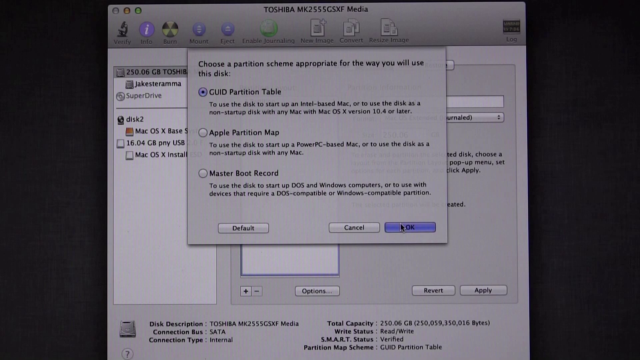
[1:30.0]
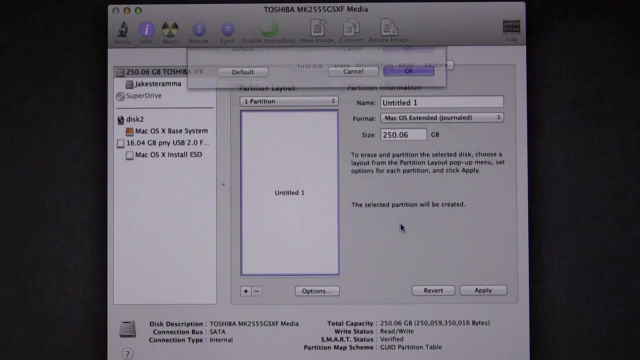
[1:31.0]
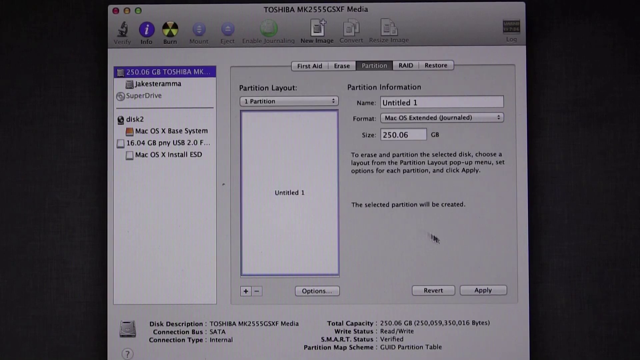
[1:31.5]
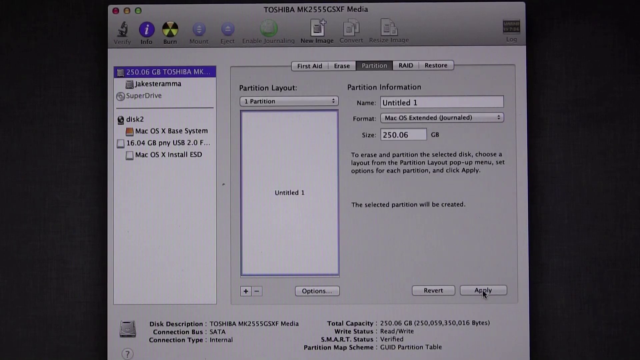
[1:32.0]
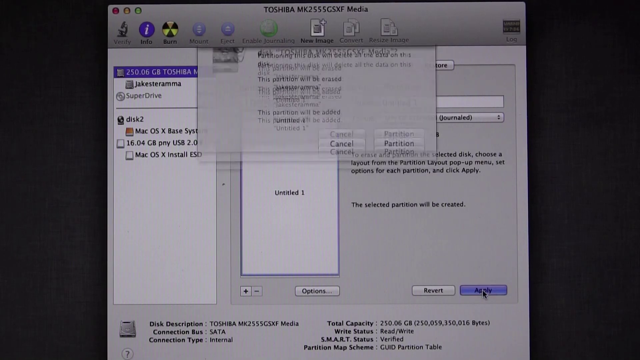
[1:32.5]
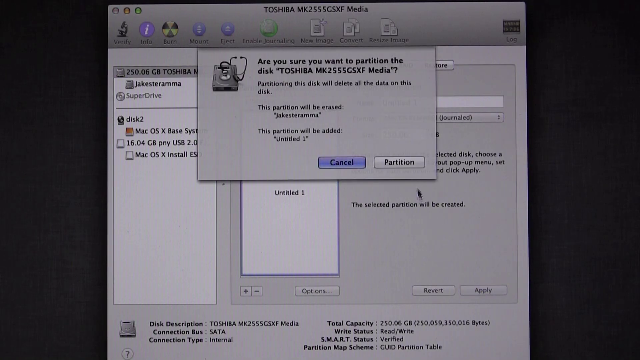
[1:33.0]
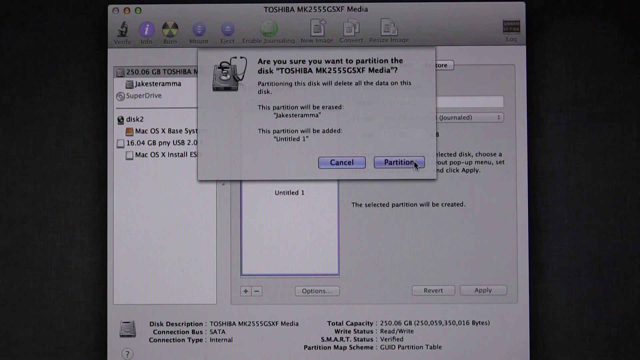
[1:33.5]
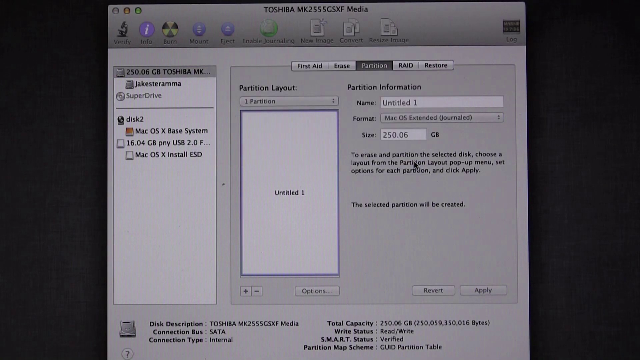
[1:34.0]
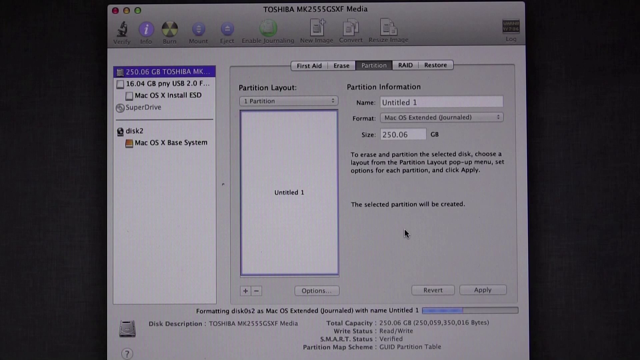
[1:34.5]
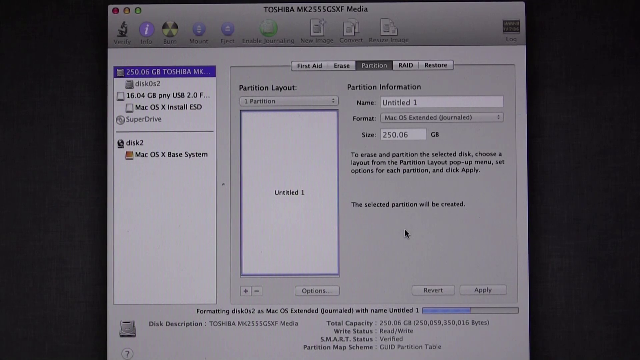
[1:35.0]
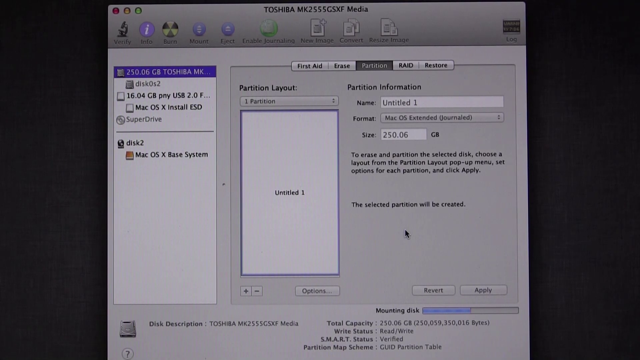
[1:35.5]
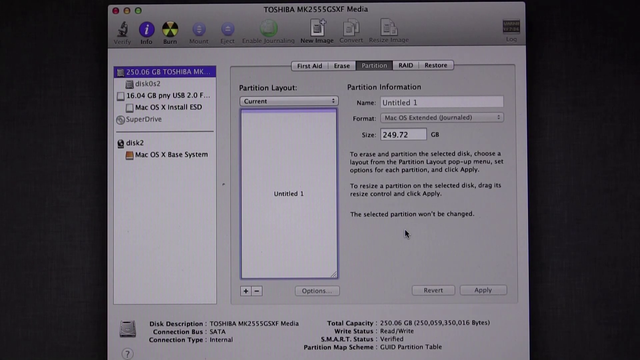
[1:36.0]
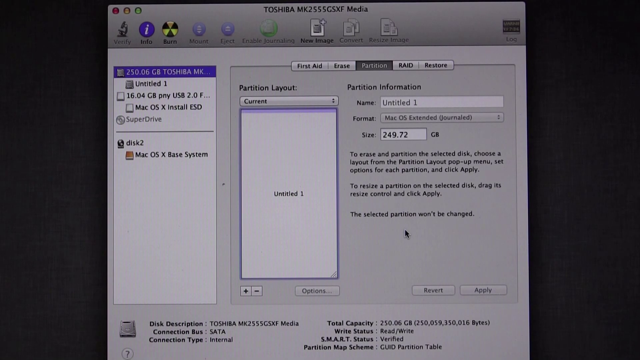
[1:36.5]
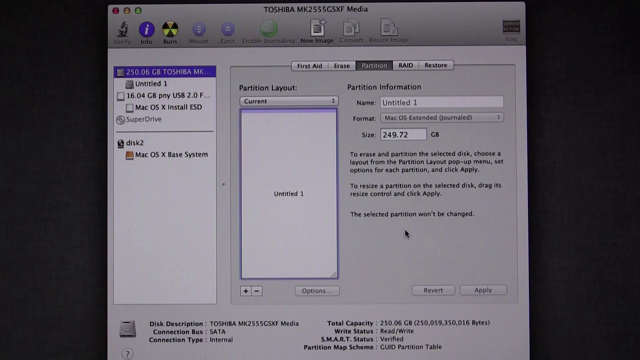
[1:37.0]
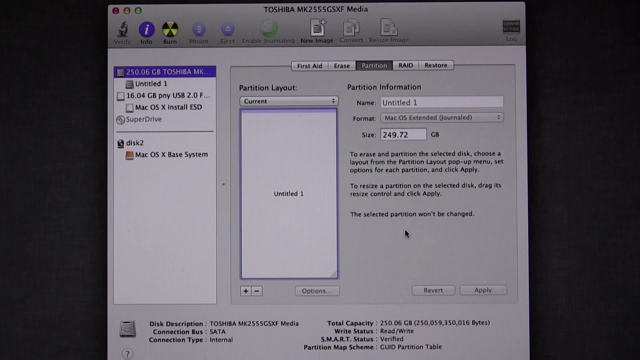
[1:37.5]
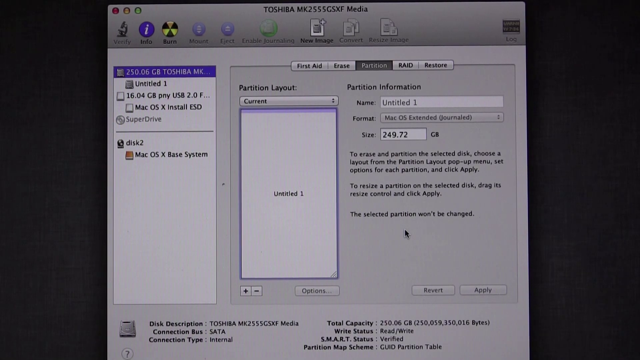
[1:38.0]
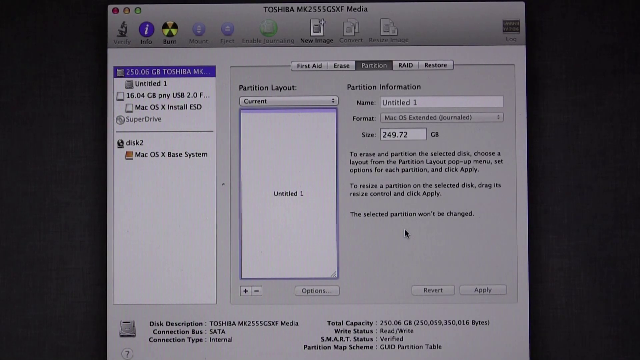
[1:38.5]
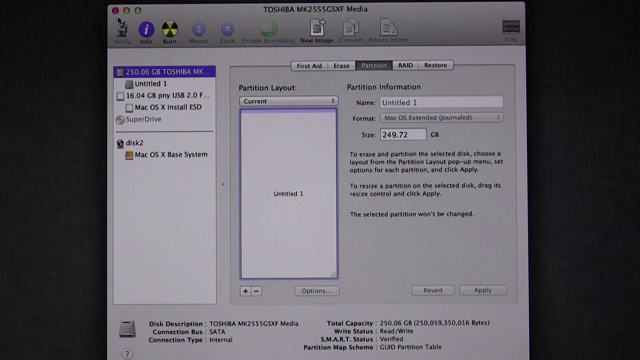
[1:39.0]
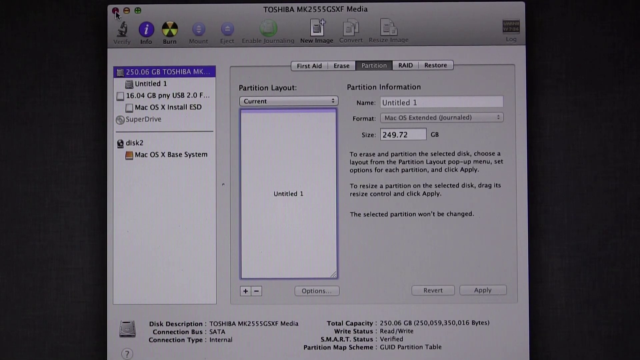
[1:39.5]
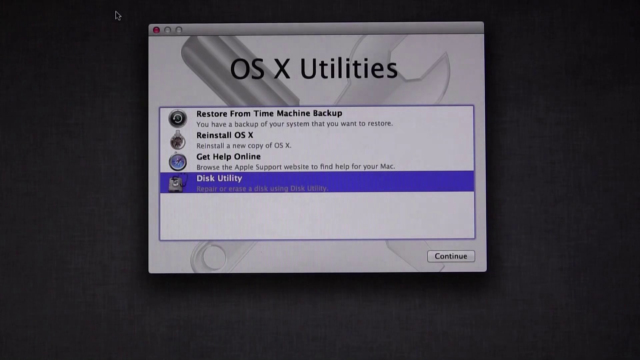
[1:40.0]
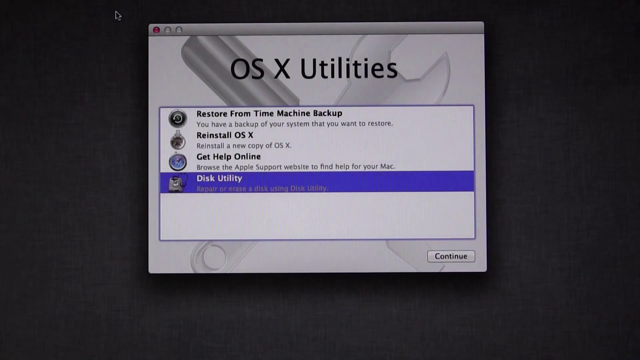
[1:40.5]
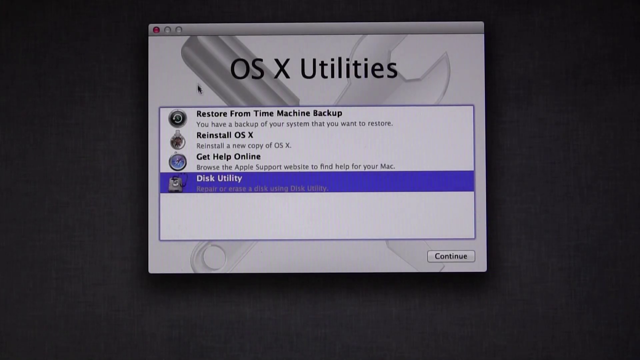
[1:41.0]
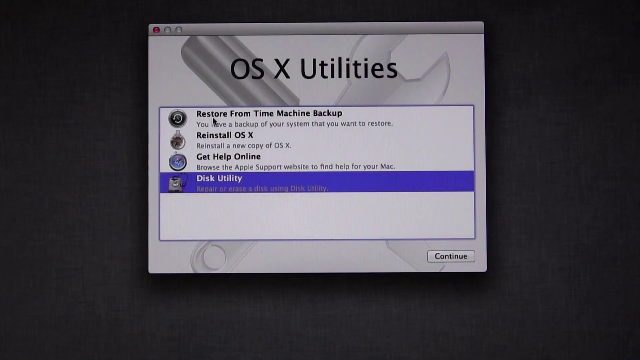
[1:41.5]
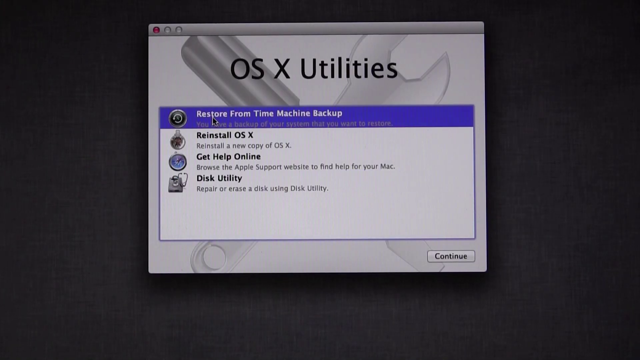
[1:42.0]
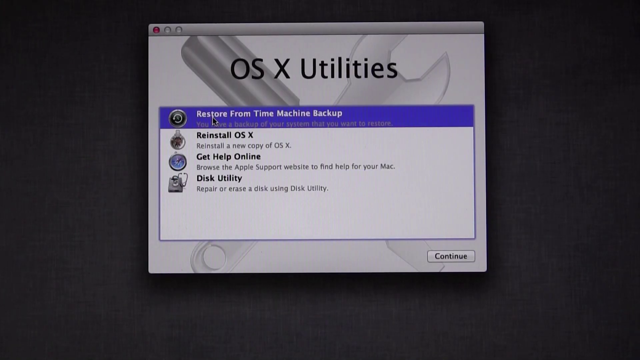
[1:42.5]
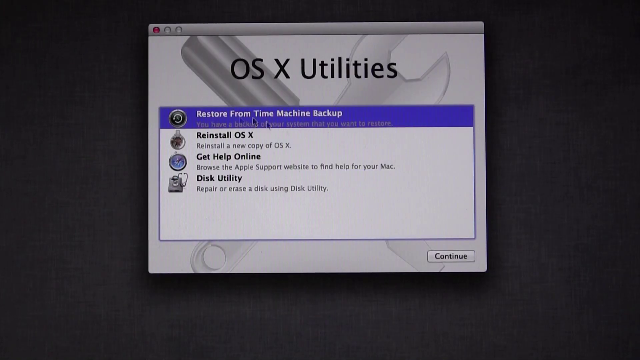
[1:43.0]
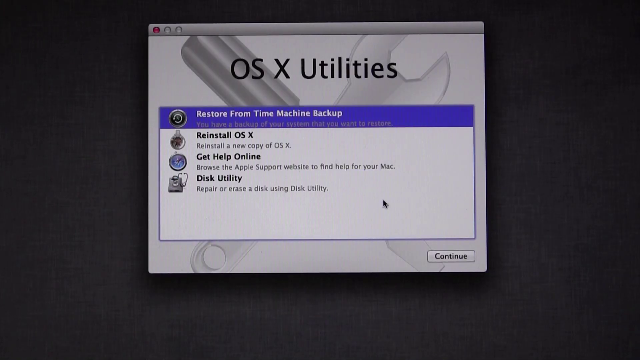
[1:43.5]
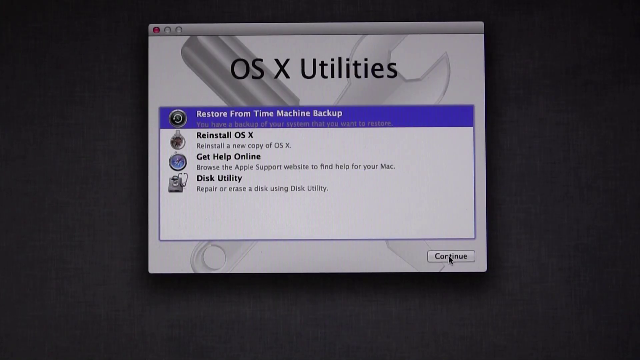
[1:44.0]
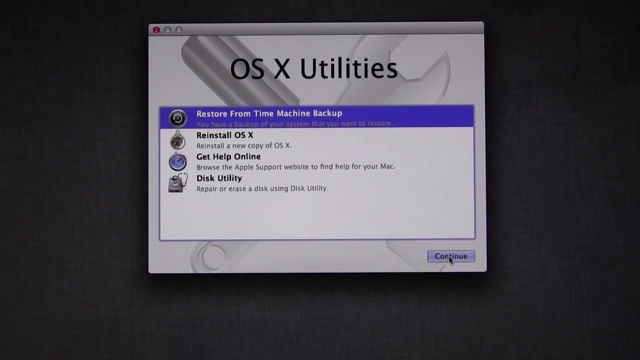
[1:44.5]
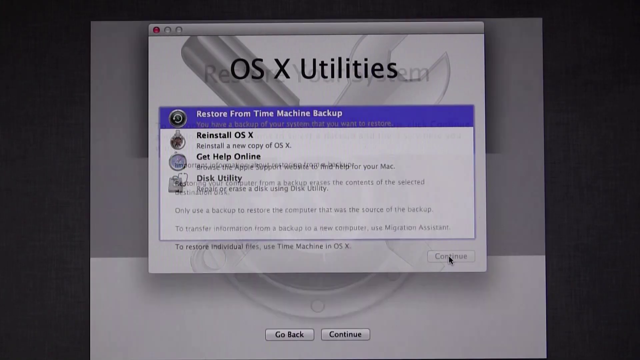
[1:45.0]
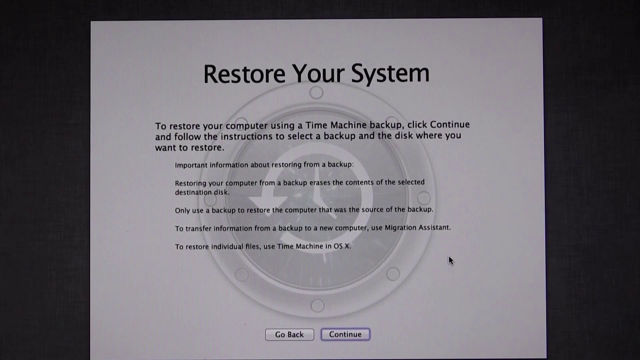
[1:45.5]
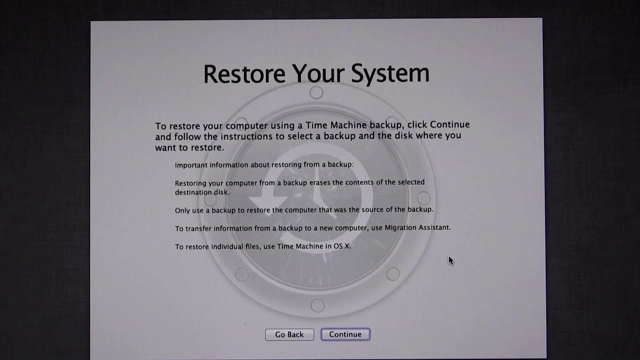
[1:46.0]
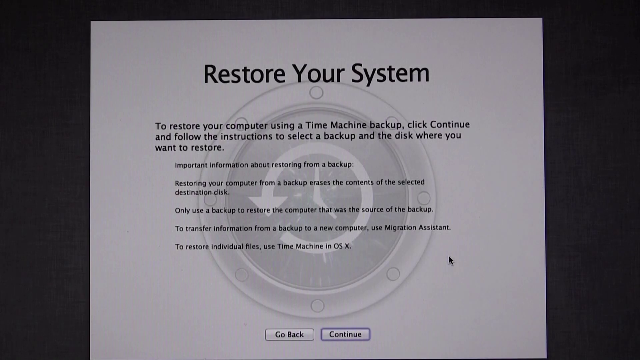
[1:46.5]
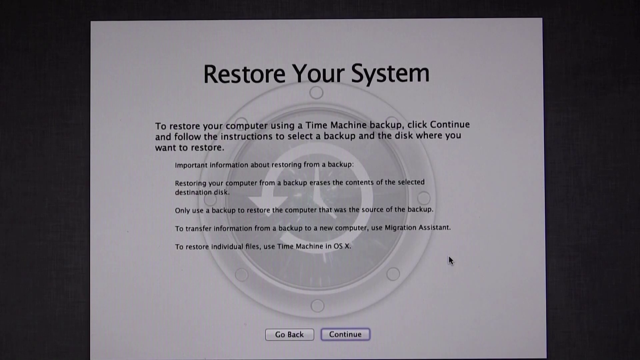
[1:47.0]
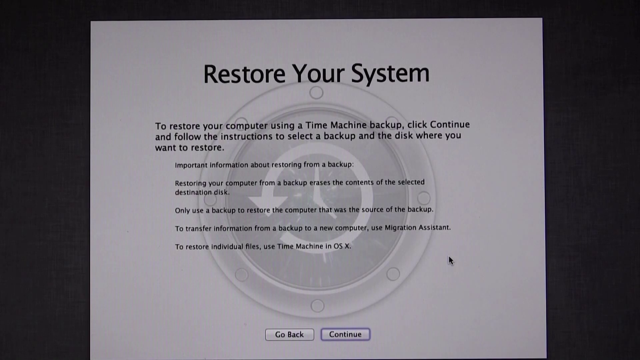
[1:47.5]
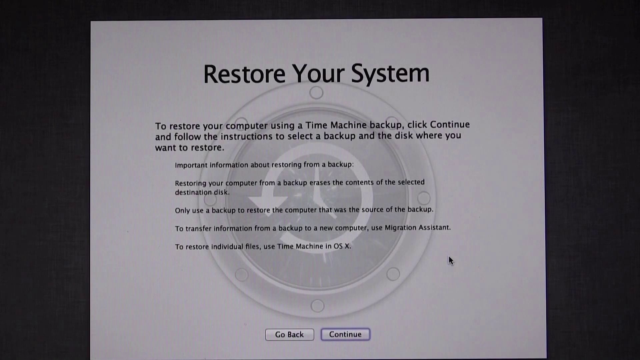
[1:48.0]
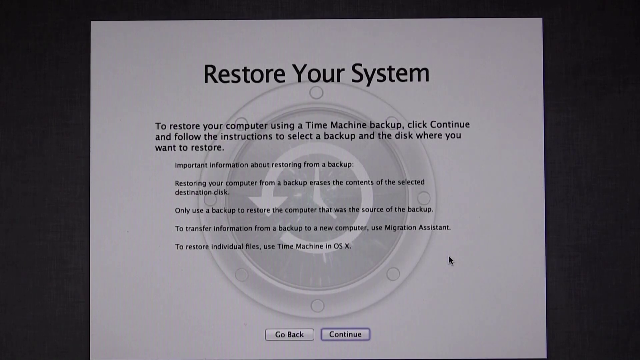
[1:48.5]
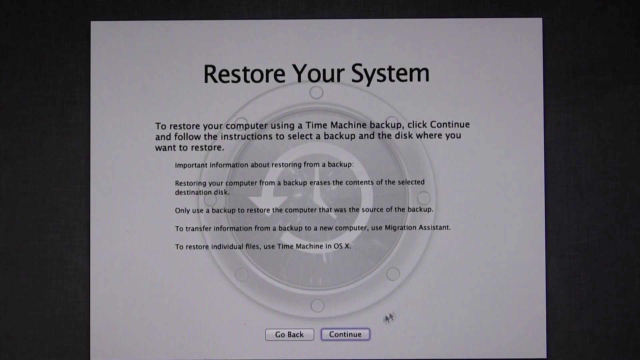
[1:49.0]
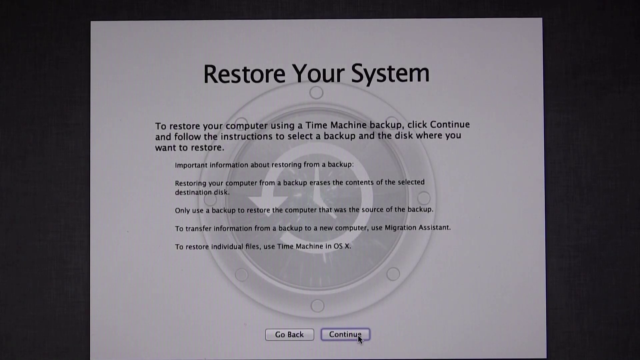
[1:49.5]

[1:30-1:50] The person clicks OK on the guide partition table, then clicks Next to partition, and the computer looks like it is working. They return to the OS X Utilities main page, click "Restore from Time Machine Backup," and push Continue. The next screen reads: "To restore your computer from a time machine backup, click Continue and follow the instructions to select the backup and the disk where you want to restore. Important information about restoring from a backup. Restoring your computer from backup erases the contents of the selected destination disk. Only use the backup to restore the computer that was the source of the backup. To transfer information from a backup to a new computer, use Migration Assistant. To restore individual files, use Time Machine in OS X."